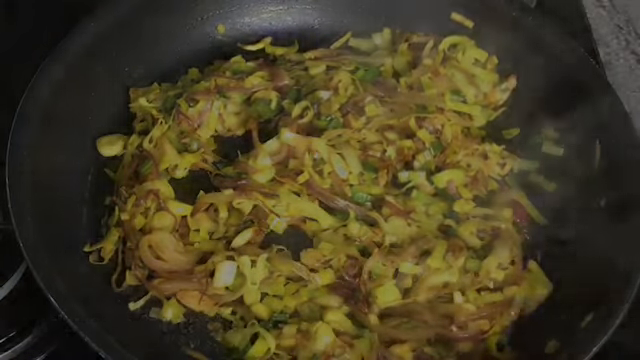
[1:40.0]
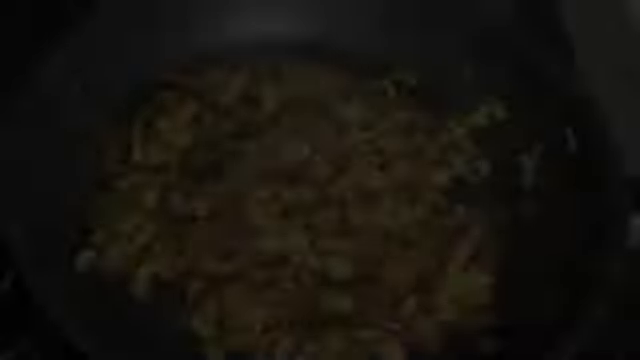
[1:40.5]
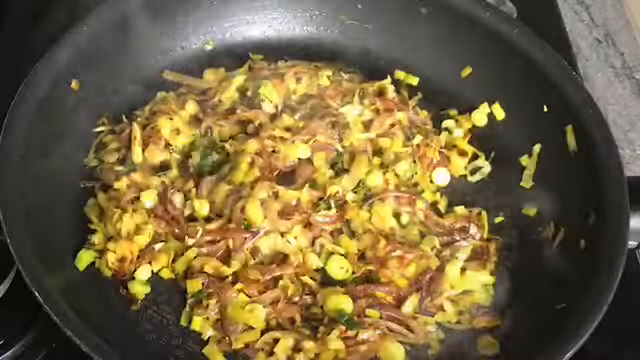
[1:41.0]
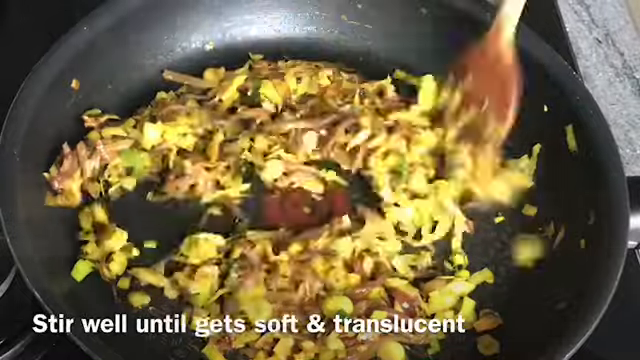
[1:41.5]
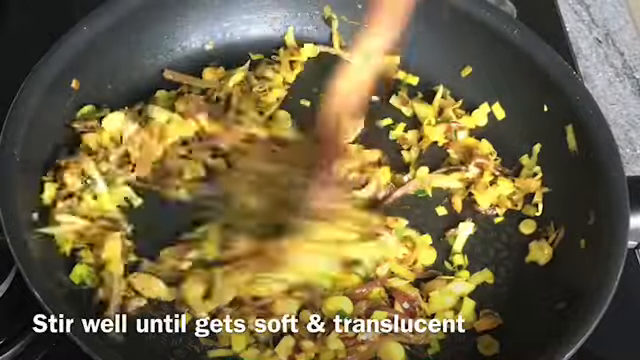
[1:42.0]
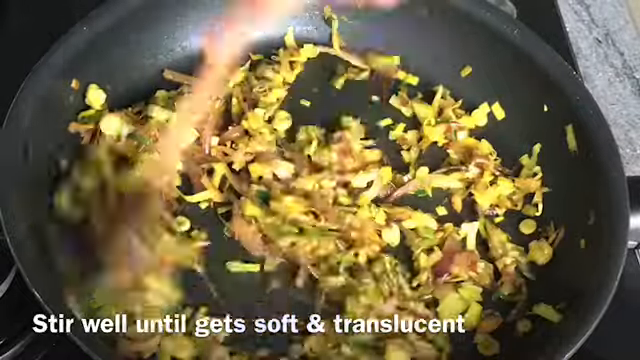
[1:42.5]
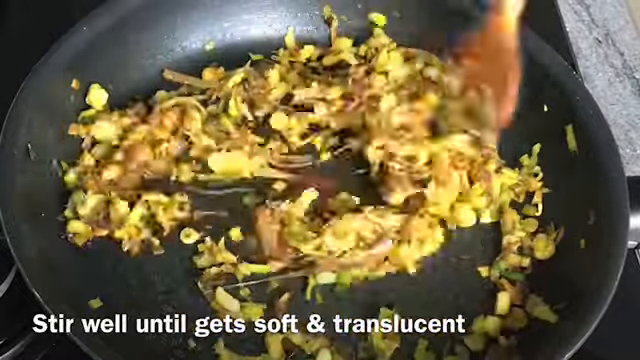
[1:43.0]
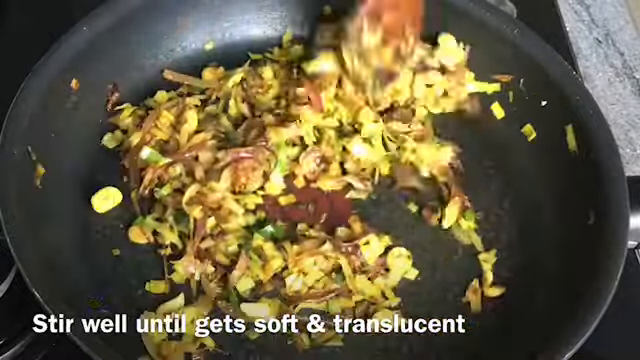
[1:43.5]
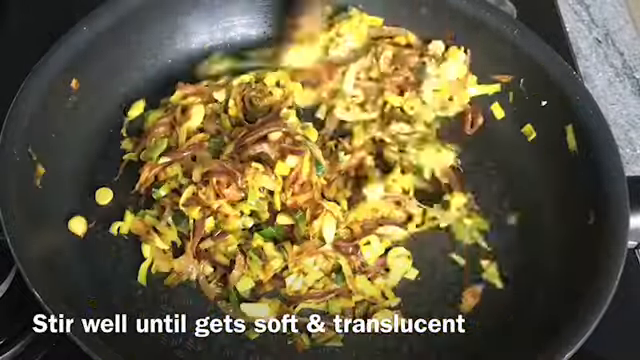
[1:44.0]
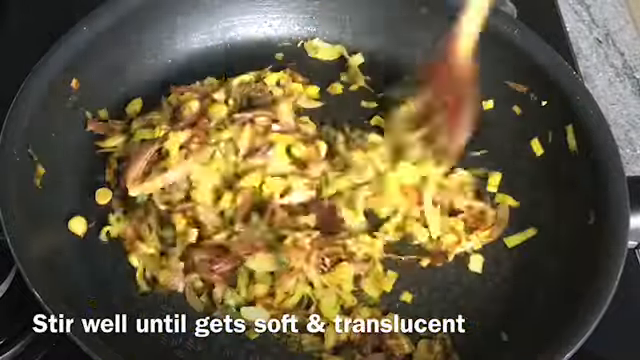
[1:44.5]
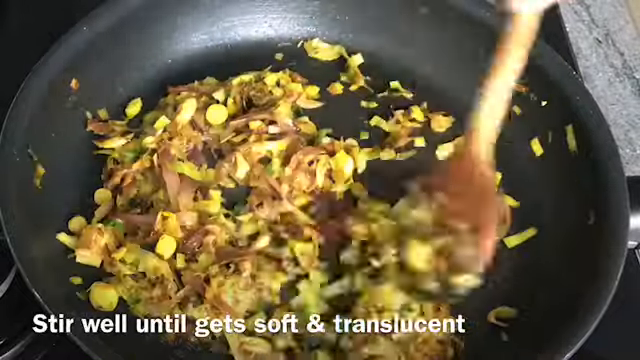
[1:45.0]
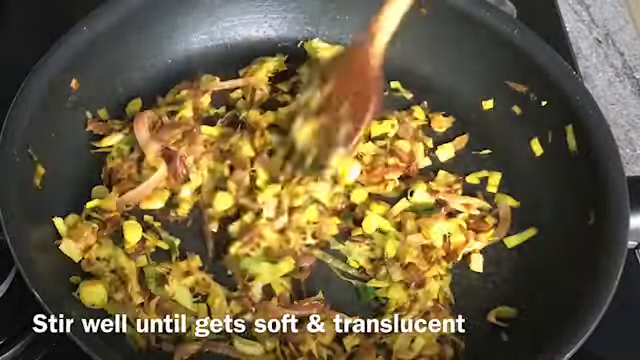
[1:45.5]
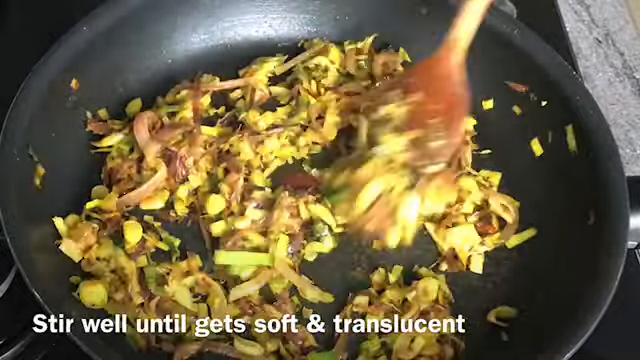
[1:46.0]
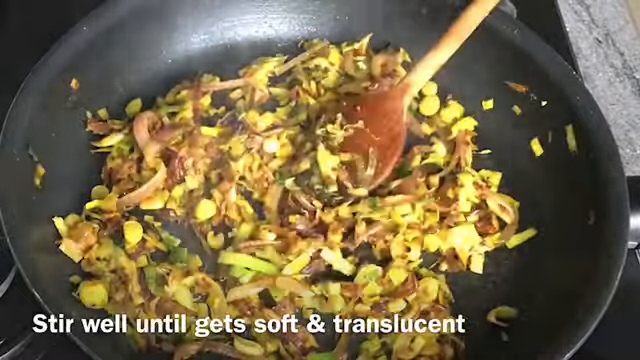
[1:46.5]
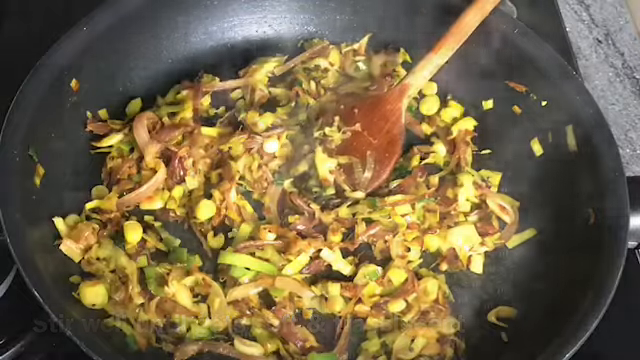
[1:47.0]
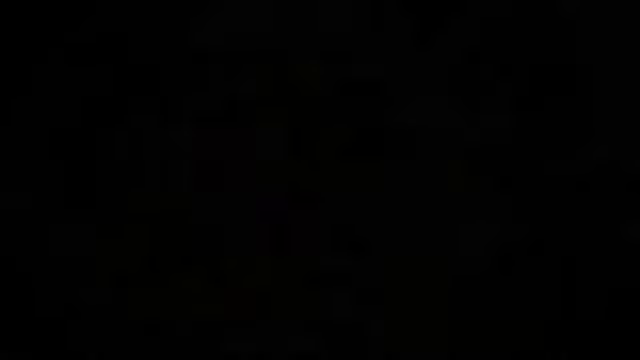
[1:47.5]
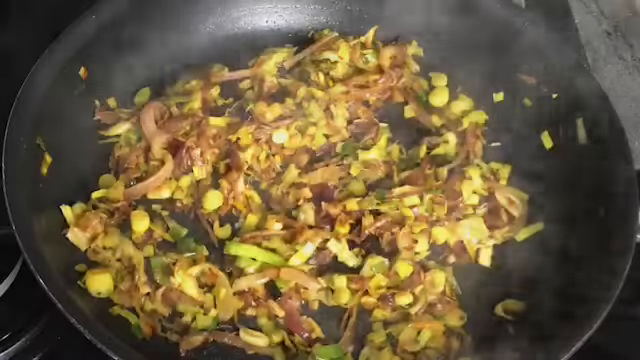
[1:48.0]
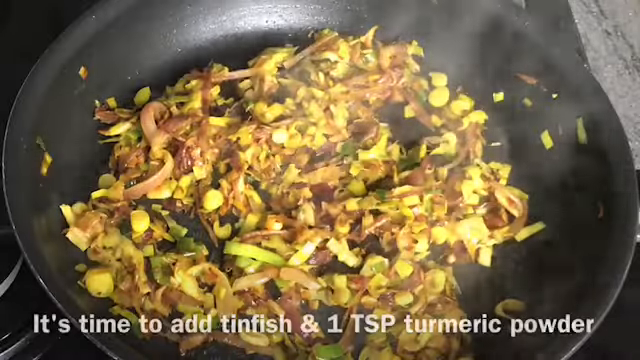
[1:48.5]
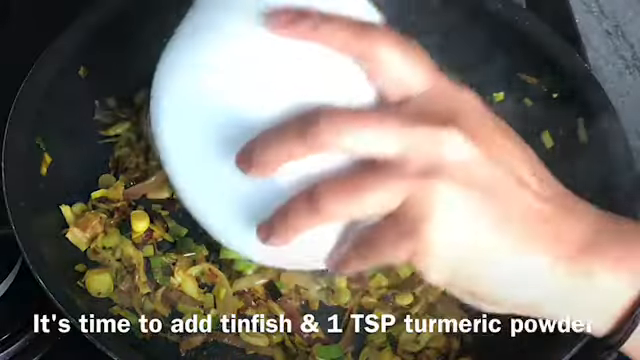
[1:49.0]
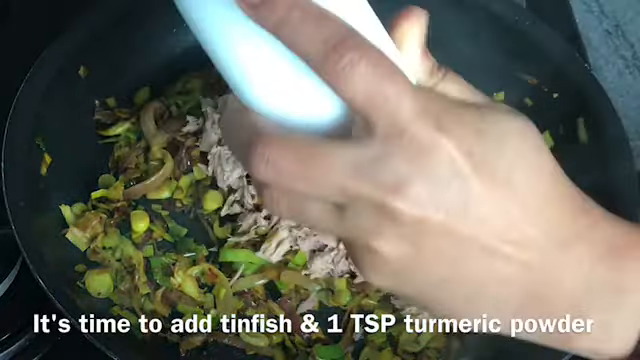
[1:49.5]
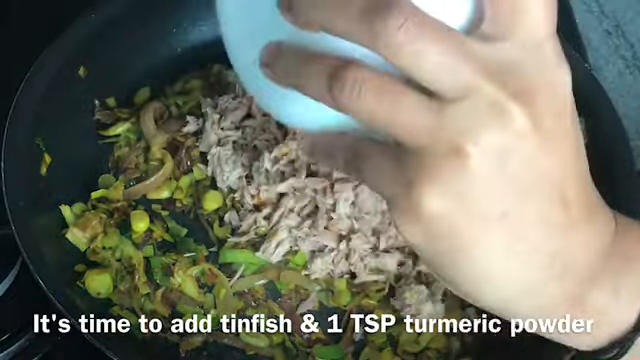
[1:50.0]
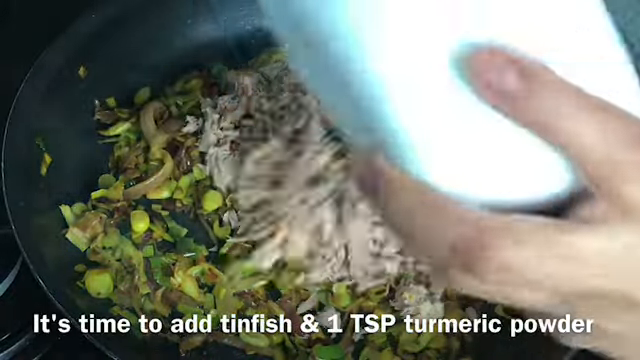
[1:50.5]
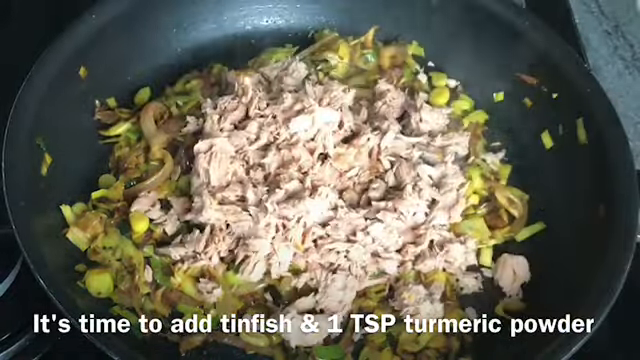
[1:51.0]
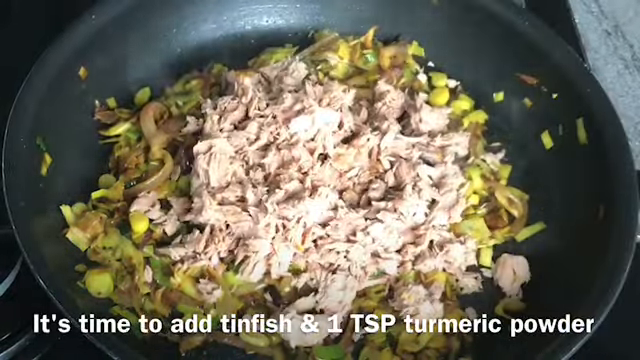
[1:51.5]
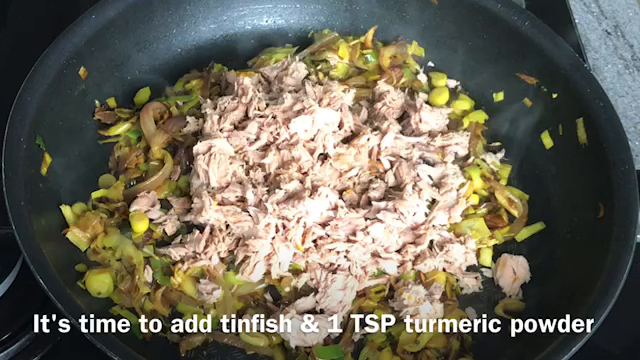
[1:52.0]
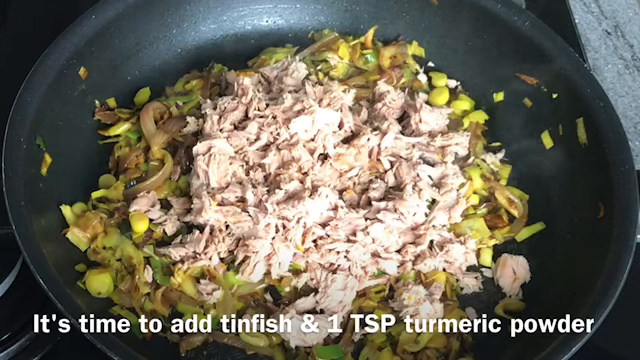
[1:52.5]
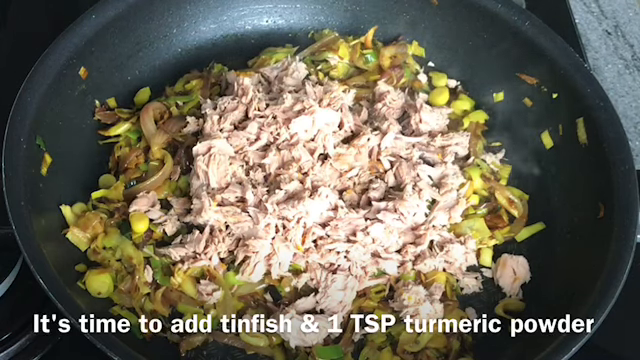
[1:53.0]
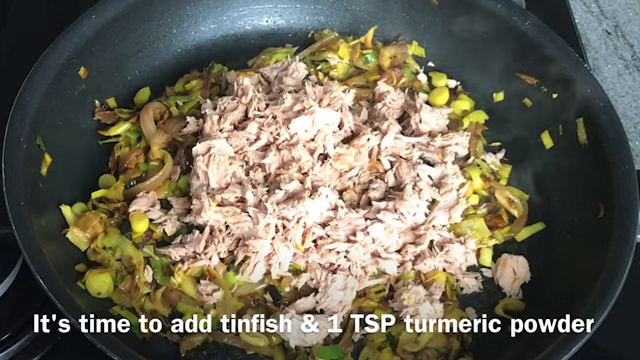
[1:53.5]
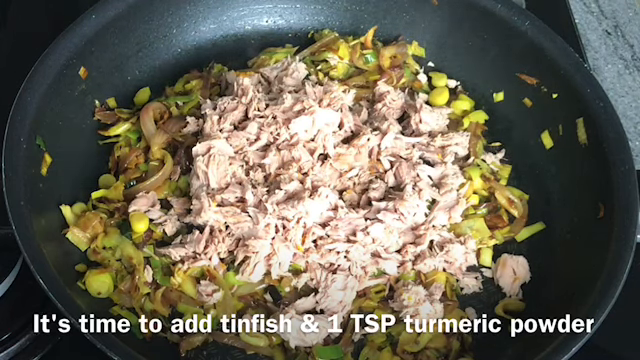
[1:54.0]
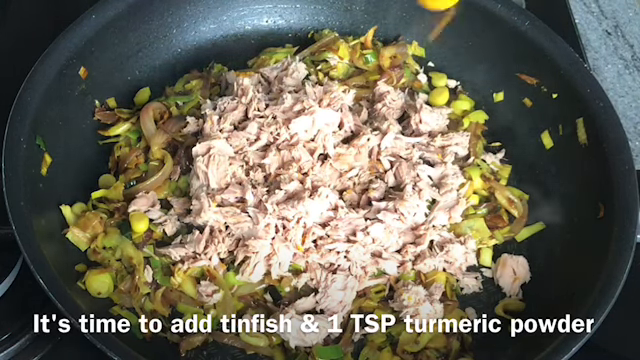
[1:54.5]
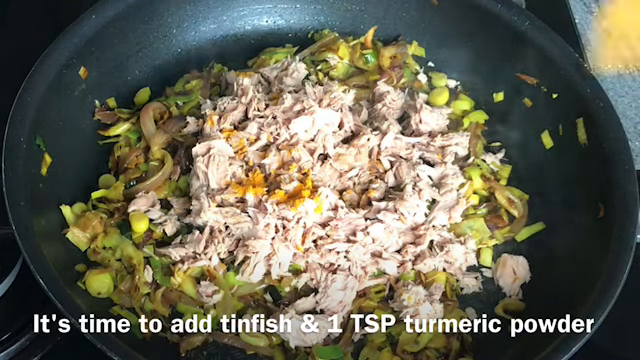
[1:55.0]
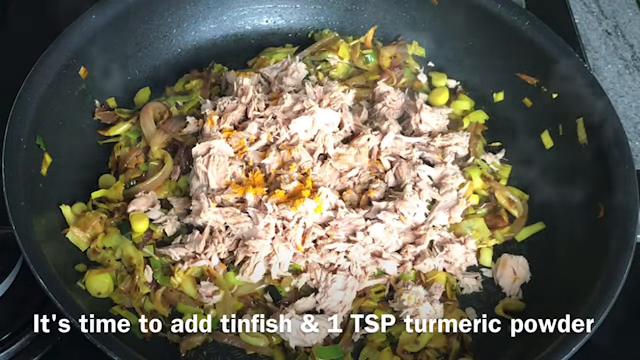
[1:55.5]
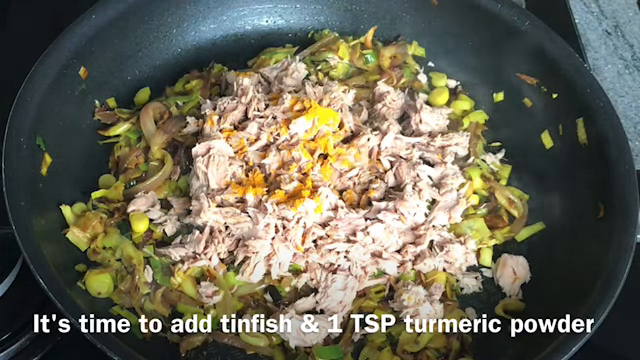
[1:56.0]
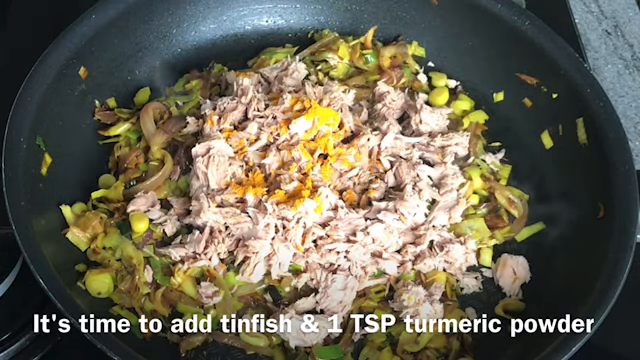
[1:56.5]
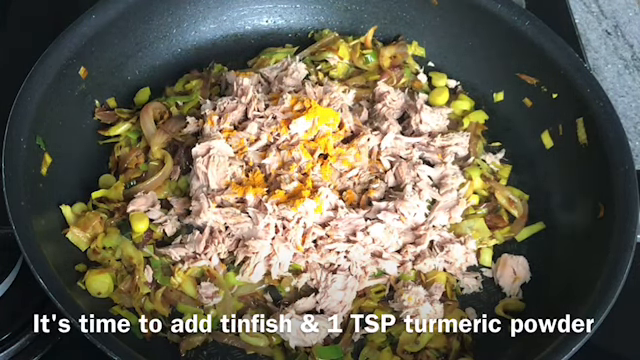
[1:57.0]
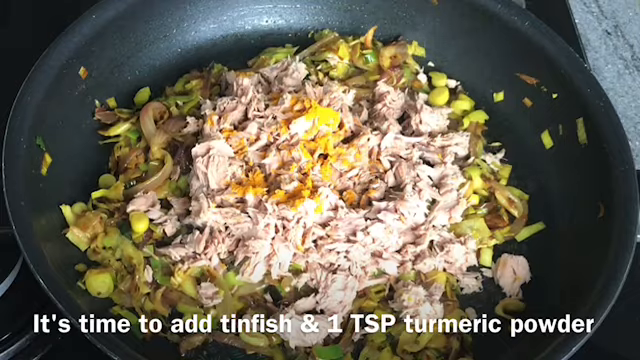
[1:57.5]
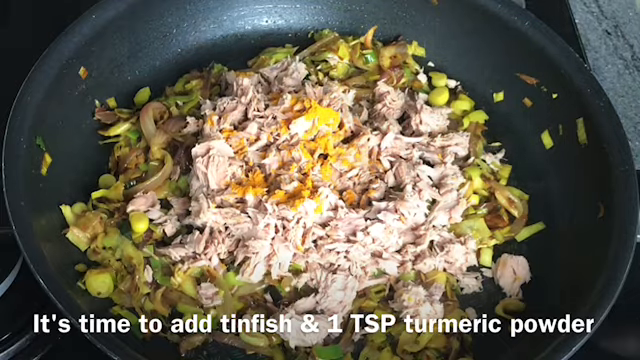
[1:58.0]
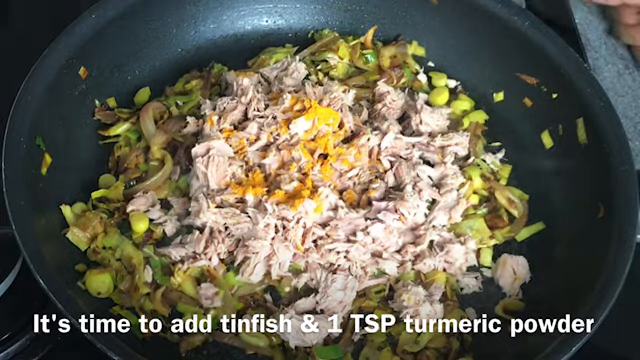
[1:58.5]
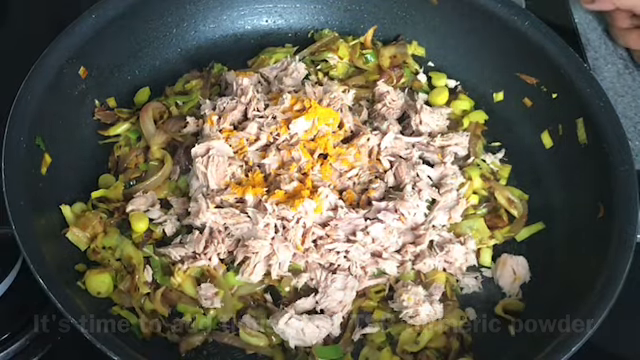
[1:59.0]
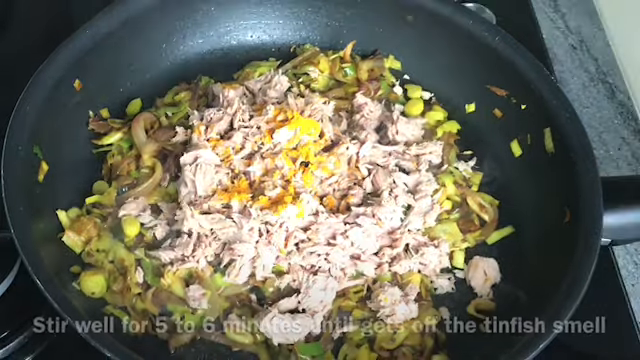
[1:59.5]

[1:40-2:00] Stirring continues with the same wooden spoon while text reads "Stir well until it gets soft and translucent." The ingredients look very soft; the onions are quite brown and the leeks more of a yellow with some green still visible. Text says "It's time to add tin fish and one teaspoon of turmeric powder." The hand and the white bowl with the fish are wiped, and the fish is poured from the white bowl on top of everything in the pan. It looks like average canned tuna, a very light pink, almost white. Everything is still steaming. Bright yellow turmeric goes on top of the fish and vegetables in the middle top, apparently added with a measuring spoon that looks white.